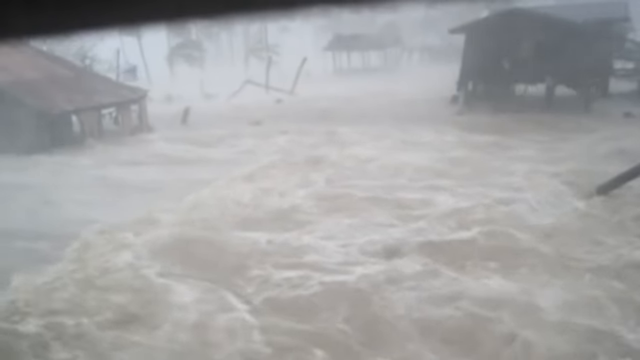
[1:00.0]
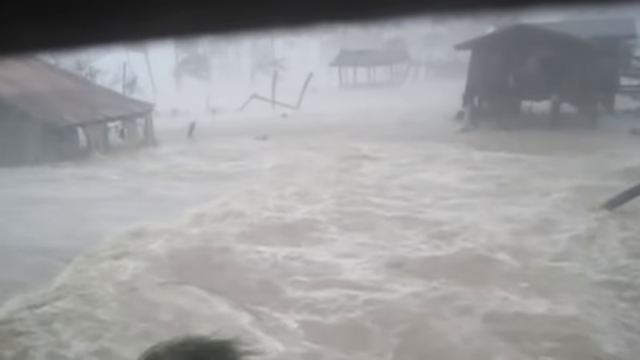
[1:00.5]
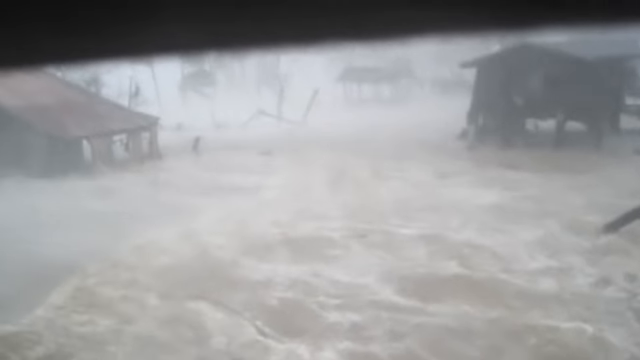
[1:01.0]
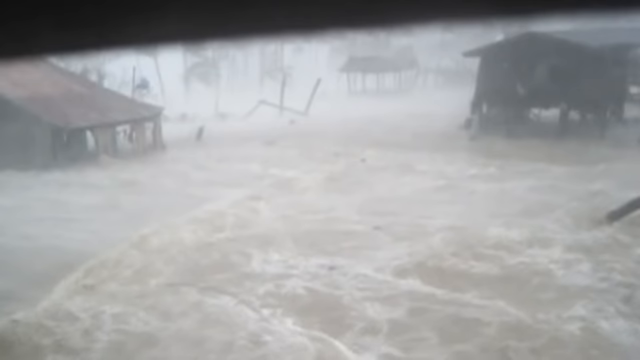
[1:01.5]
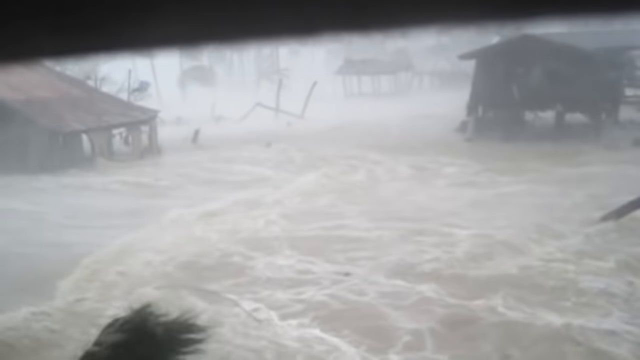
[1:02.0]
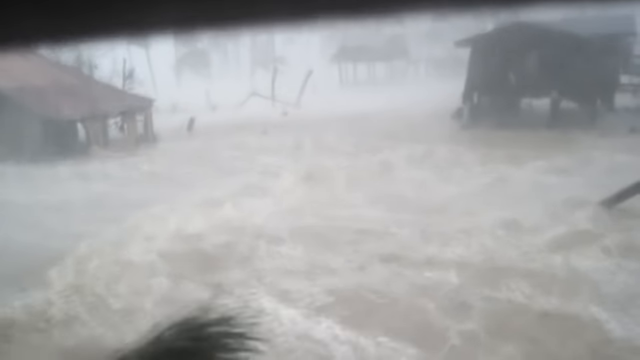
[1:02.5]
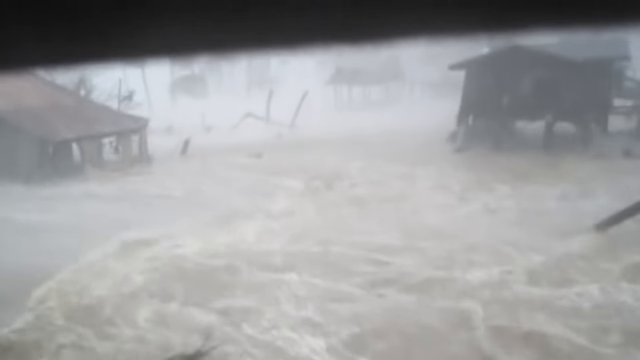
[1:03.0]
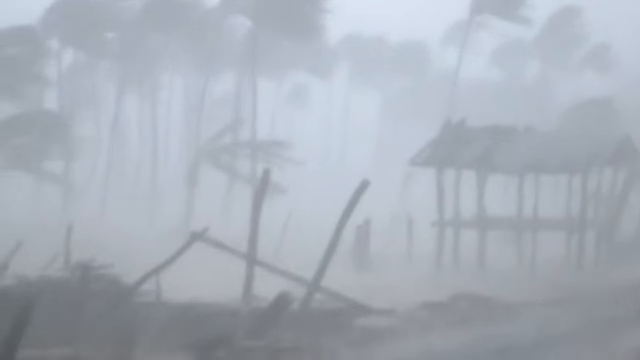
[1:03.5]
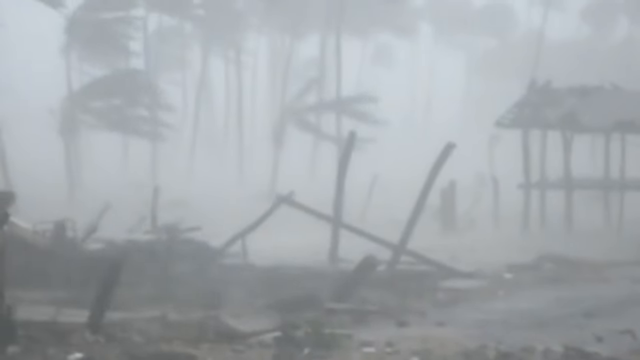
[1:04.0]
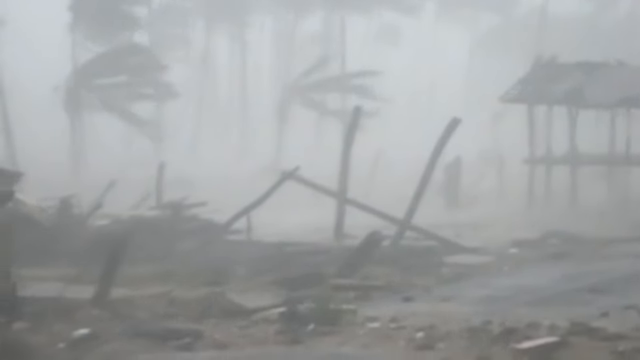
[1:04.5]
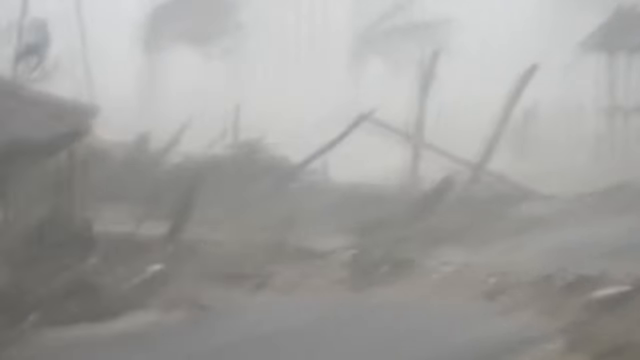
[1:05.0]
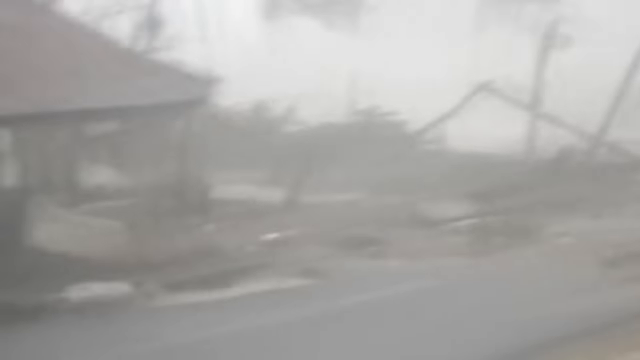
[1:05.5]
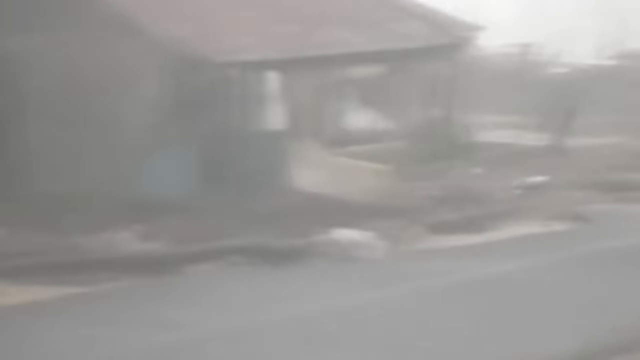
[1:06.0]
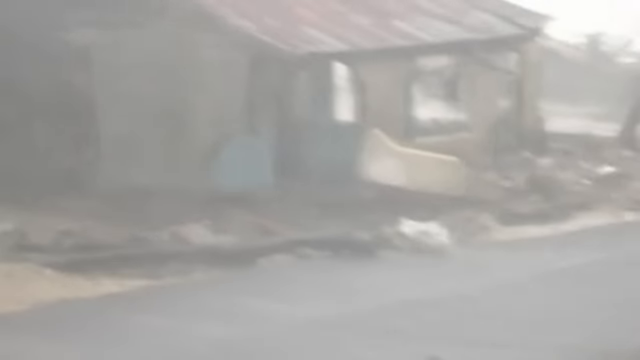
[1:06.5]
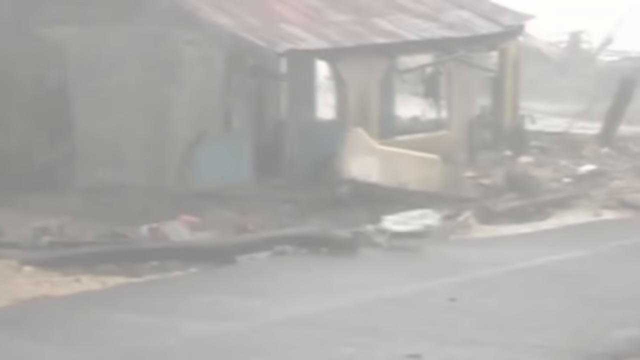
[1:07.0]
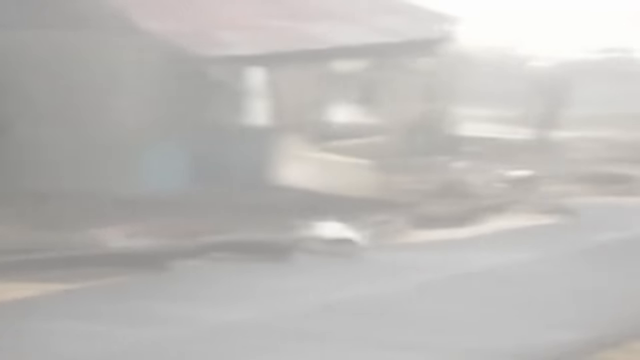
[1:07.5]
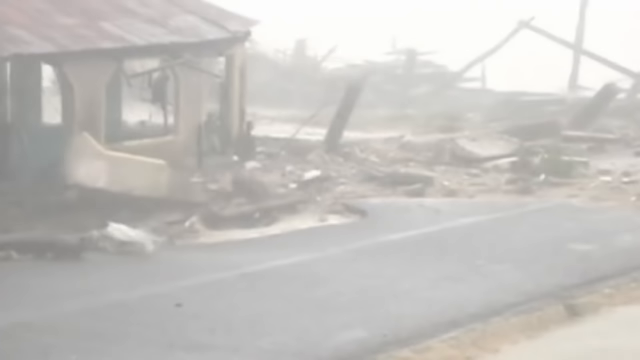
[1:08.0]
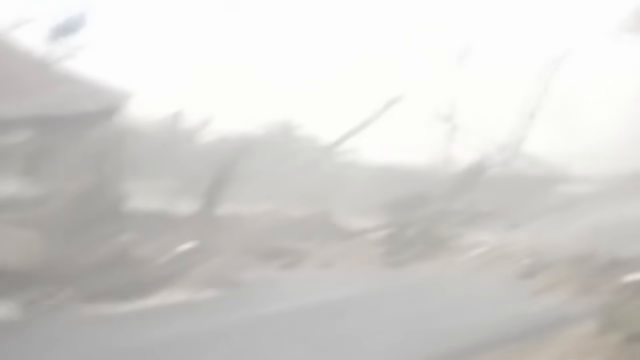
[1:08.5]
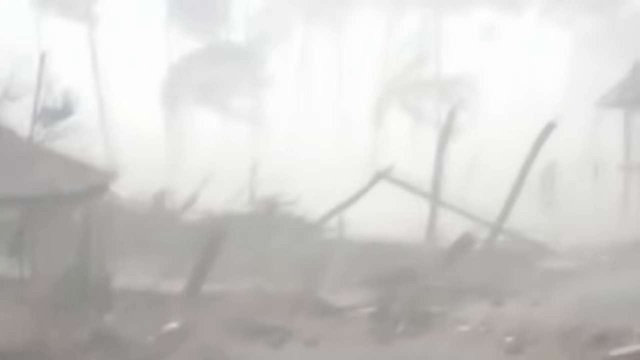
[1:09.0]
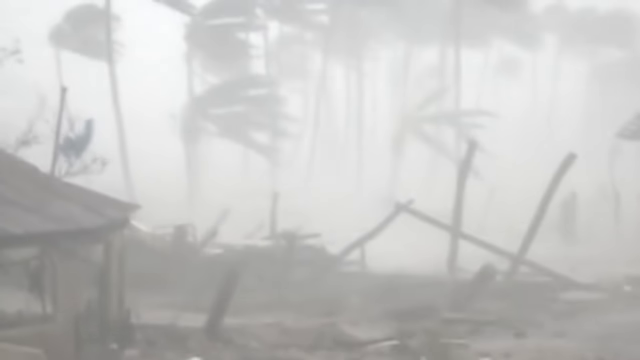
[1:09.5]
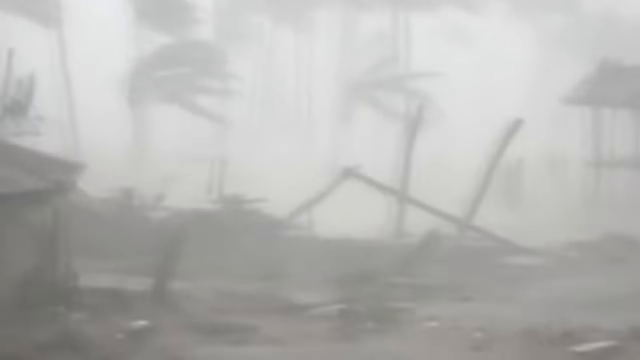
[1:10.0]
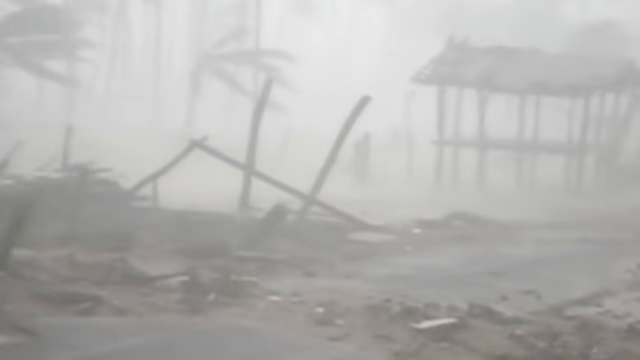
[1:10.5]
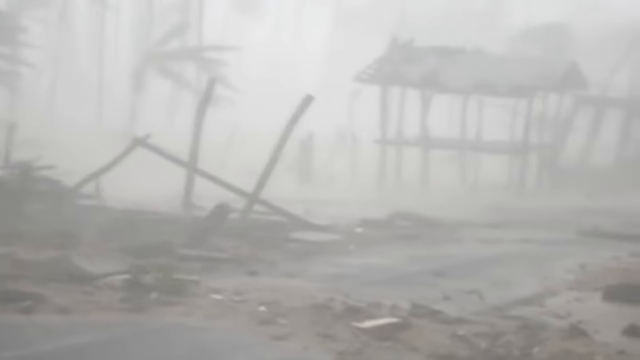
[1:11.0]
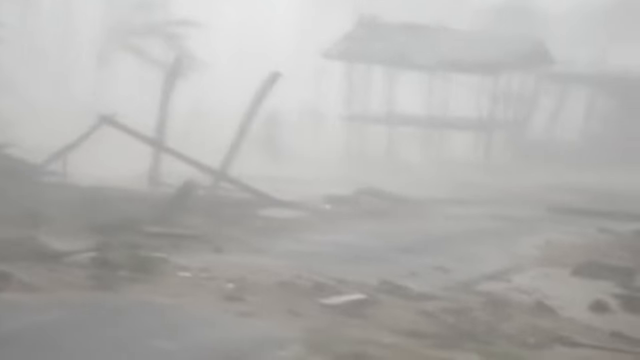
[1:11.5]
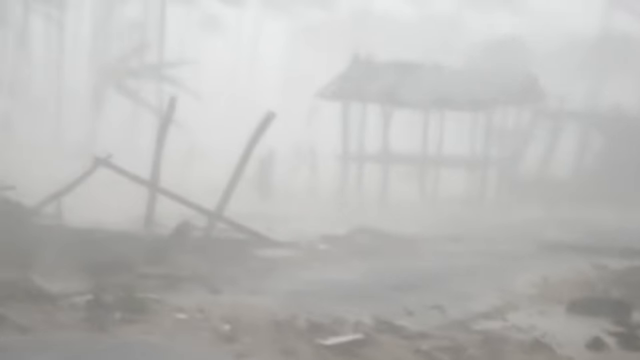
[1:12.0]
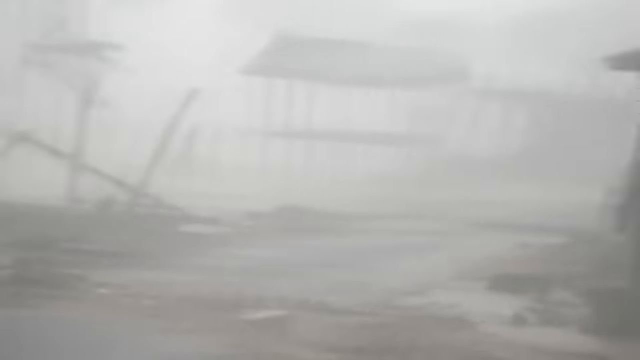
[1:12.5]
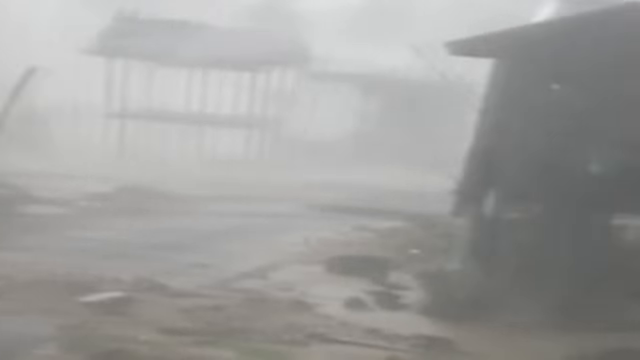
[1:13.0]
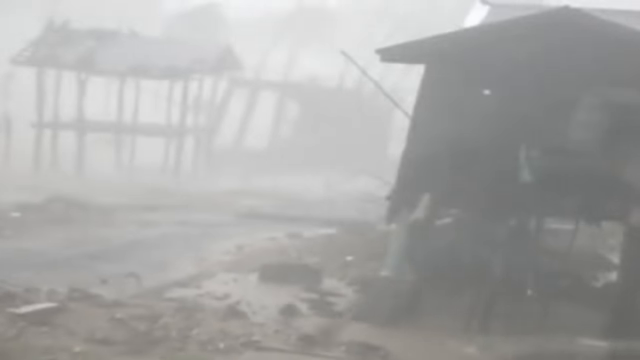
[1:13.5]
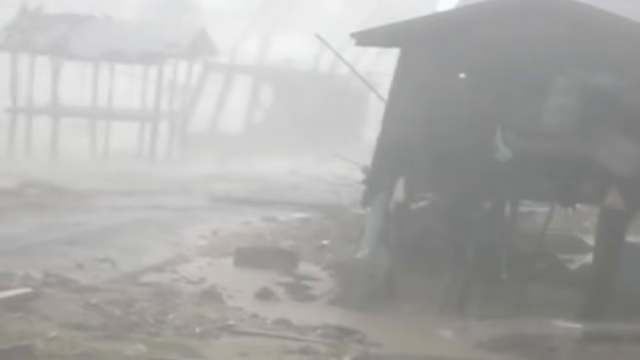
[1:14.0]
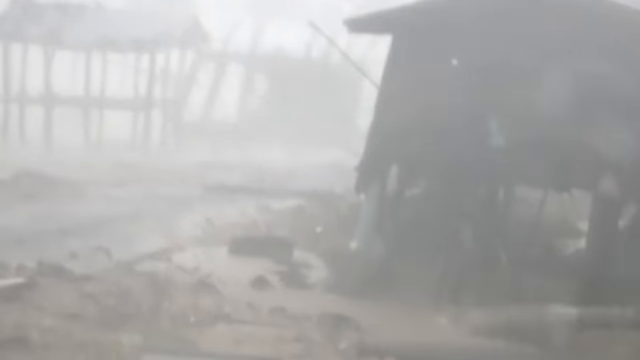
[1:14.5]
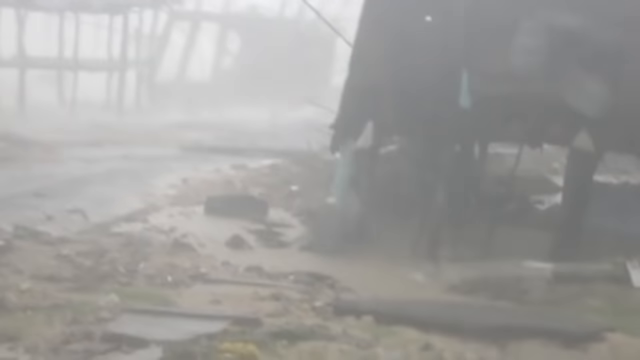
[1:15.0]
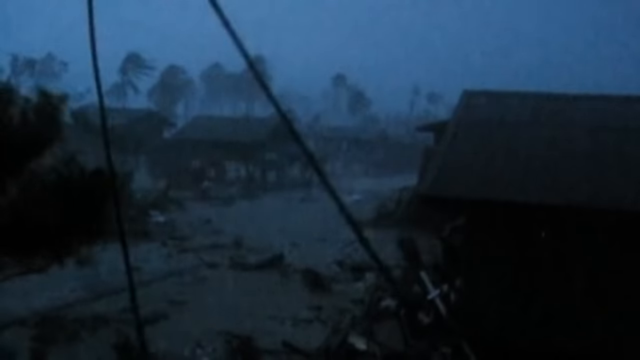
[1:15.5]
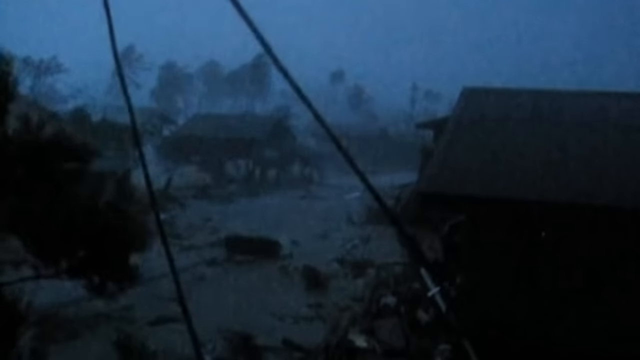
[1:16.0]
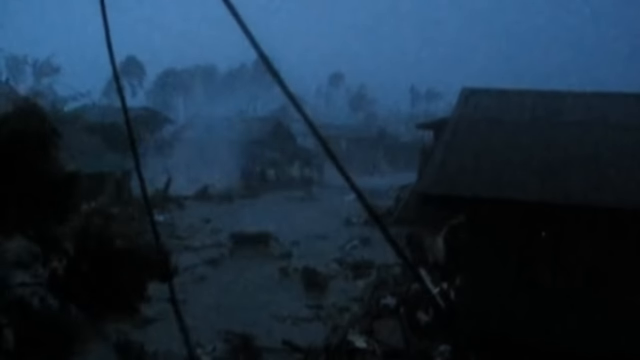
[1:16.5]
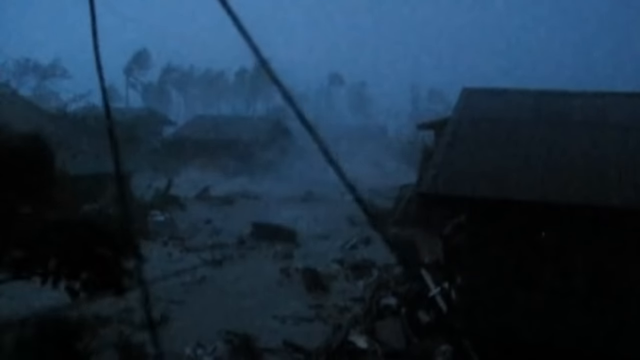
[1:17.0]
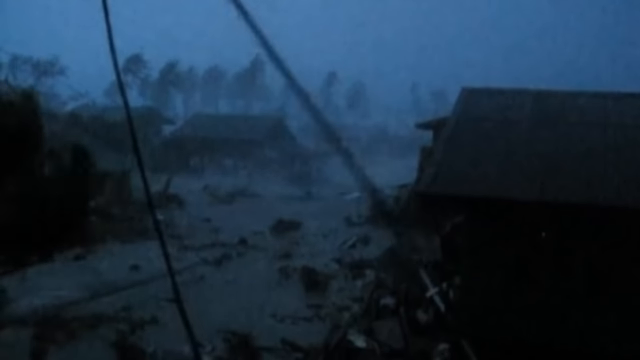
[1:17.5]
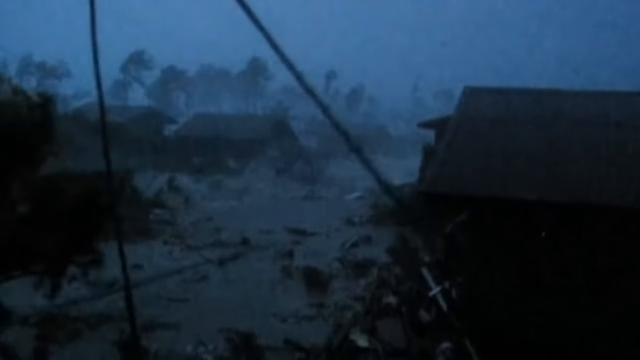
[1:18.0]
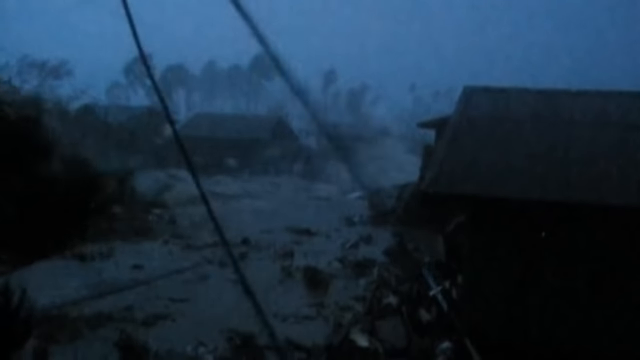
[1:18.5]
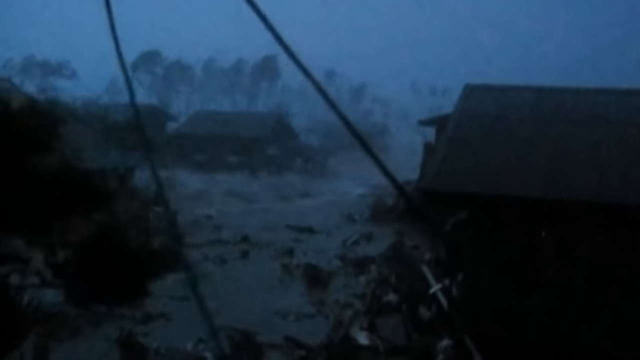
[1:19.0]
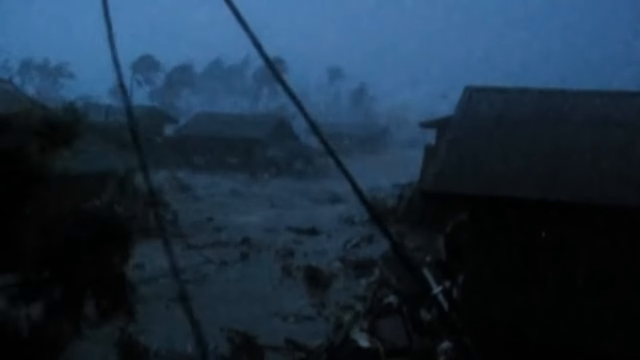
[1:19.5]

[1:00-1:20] Everything is a mess, with a lot of things on a road. Cars are submerged in water. Trees are in the water. Many buildings are visible, and it looks late in the day, maybe around 6 p.m. The storm continues, but now there seems to be more wind than water. The wind is destroying everything and everything is being swept away. One house is barely recognizable as a house except for its windows and roof; otherwise it is destroyed and disfigured.